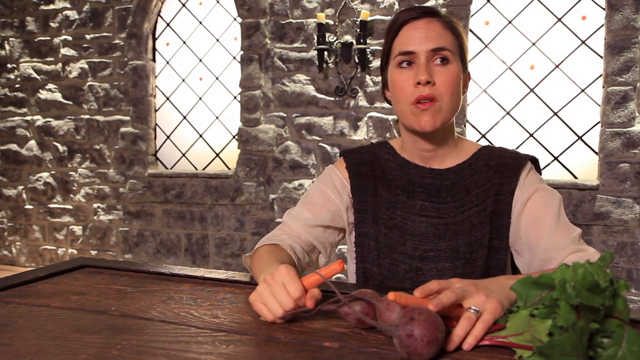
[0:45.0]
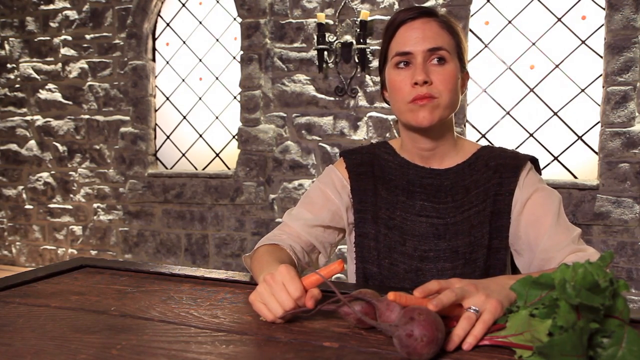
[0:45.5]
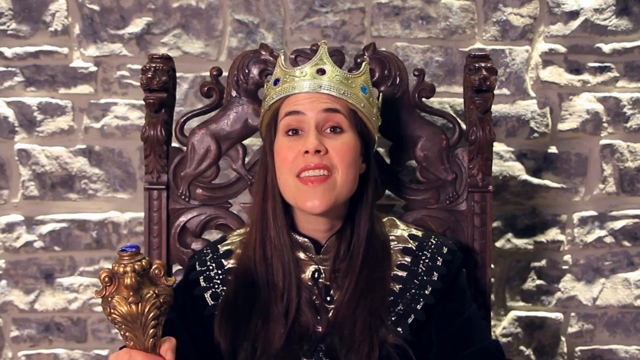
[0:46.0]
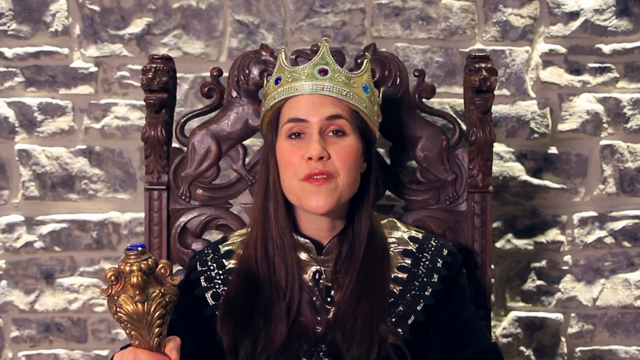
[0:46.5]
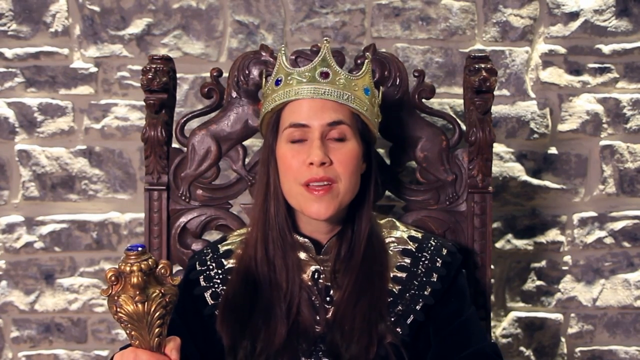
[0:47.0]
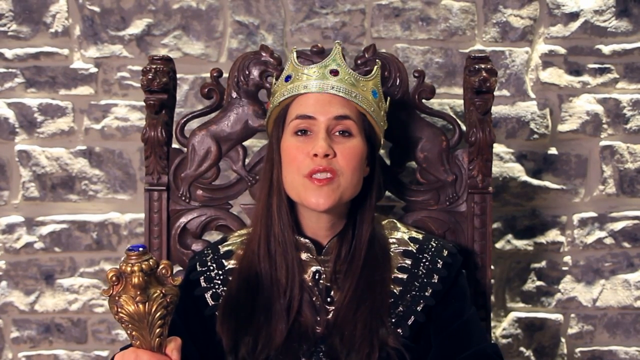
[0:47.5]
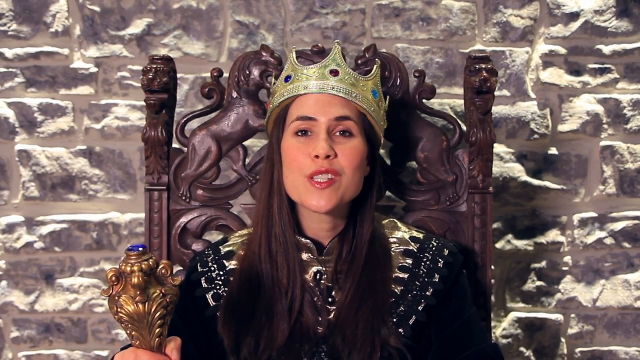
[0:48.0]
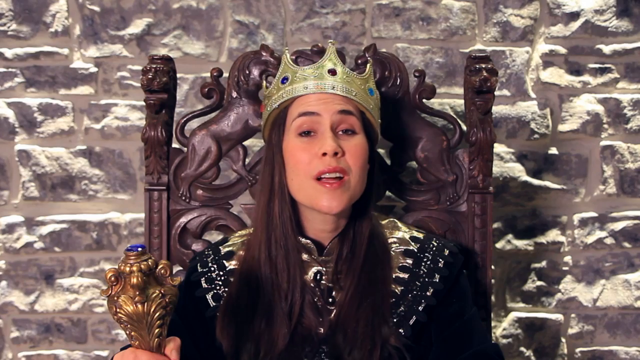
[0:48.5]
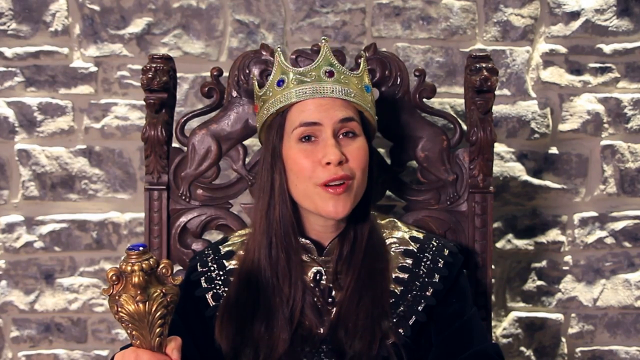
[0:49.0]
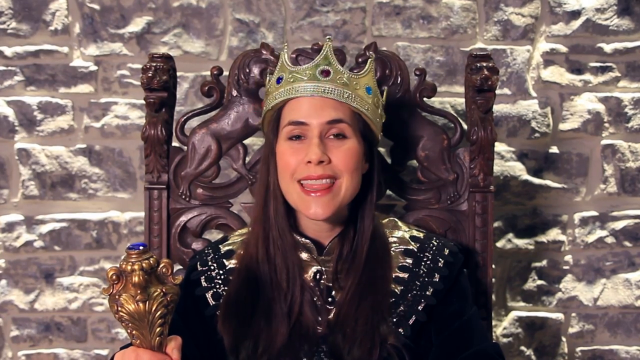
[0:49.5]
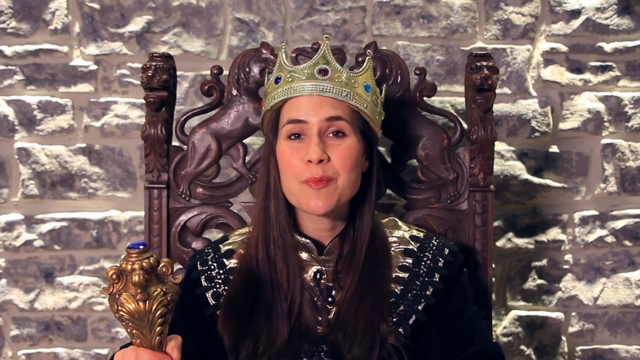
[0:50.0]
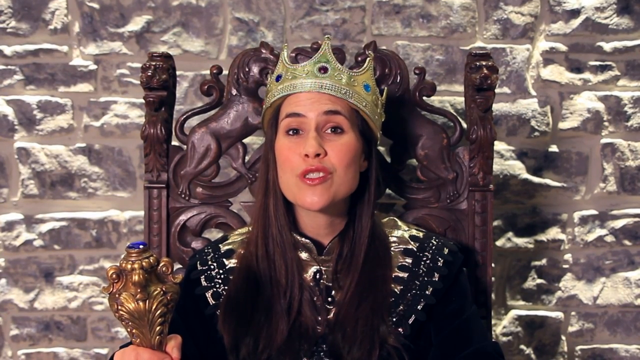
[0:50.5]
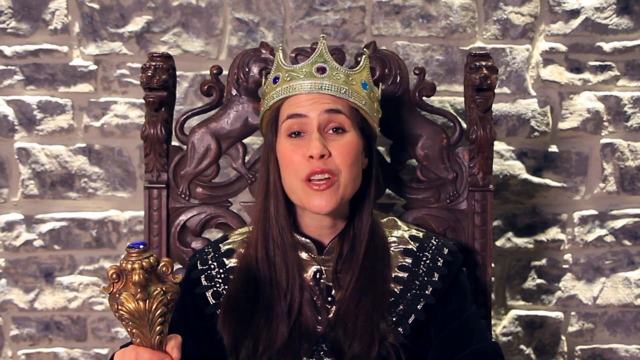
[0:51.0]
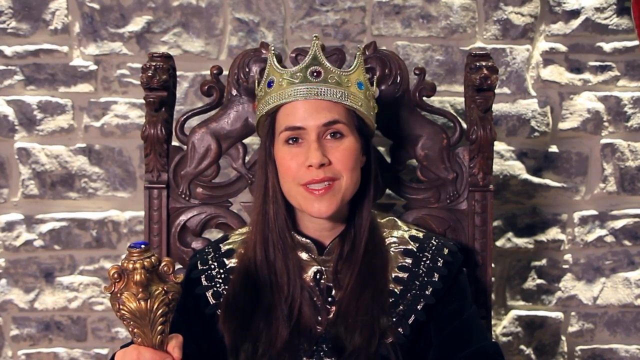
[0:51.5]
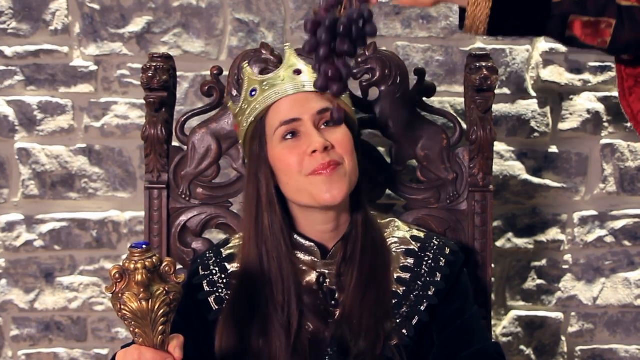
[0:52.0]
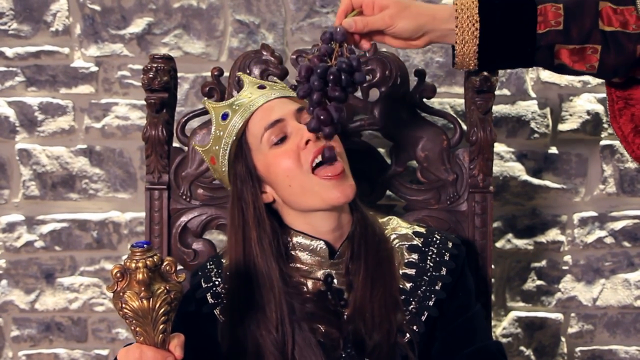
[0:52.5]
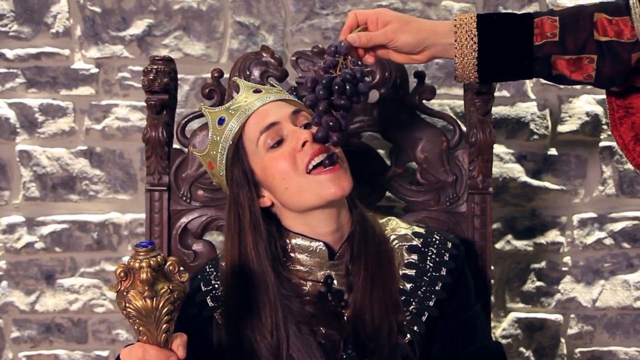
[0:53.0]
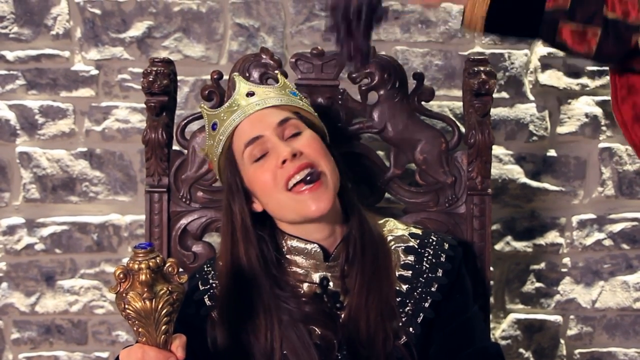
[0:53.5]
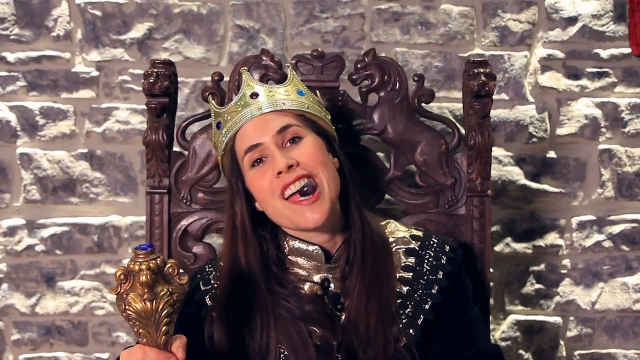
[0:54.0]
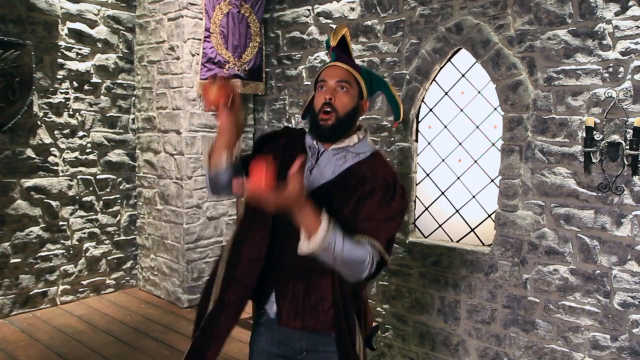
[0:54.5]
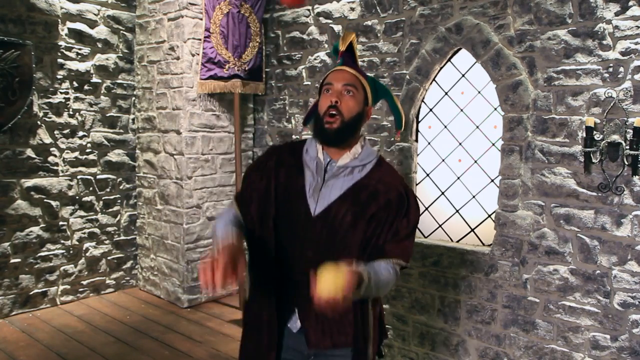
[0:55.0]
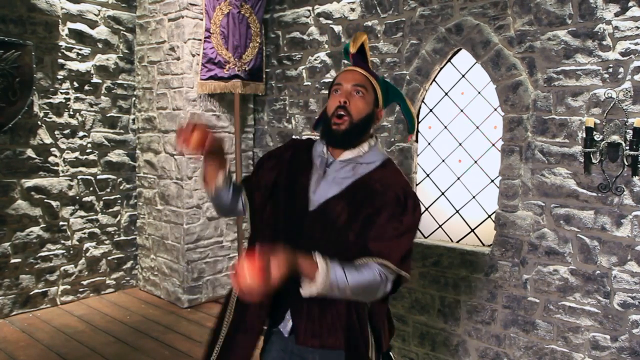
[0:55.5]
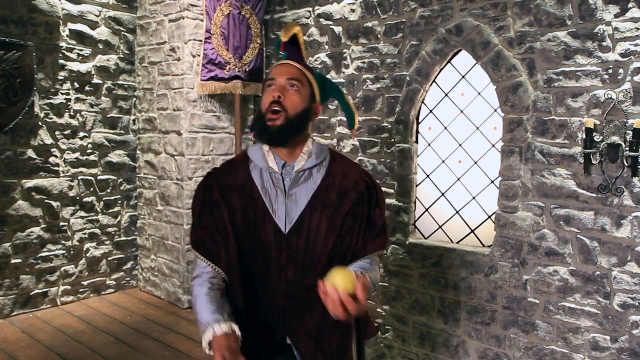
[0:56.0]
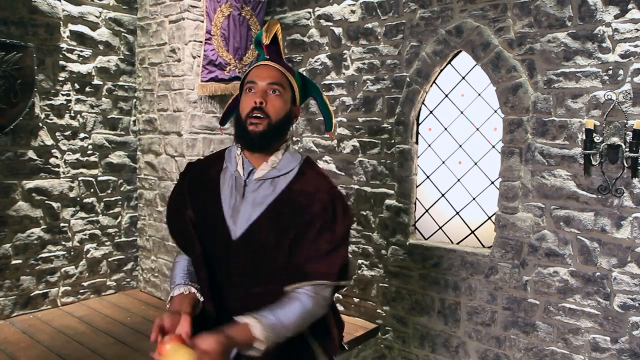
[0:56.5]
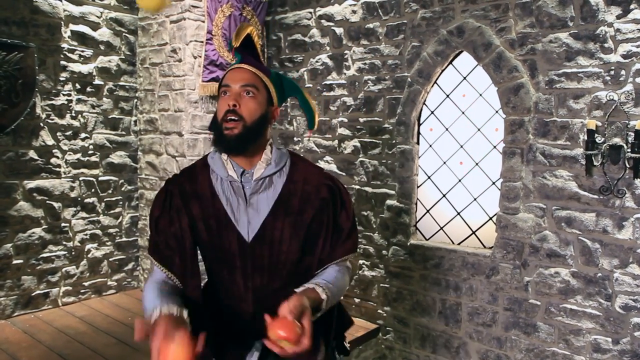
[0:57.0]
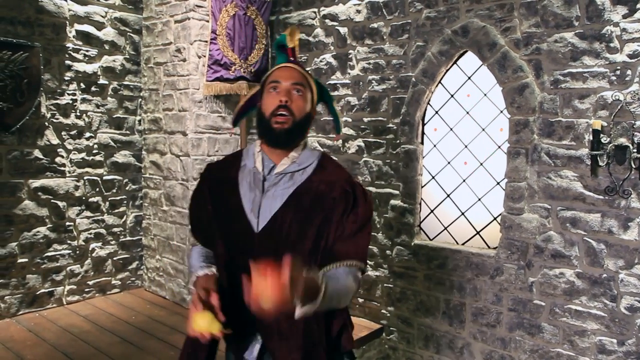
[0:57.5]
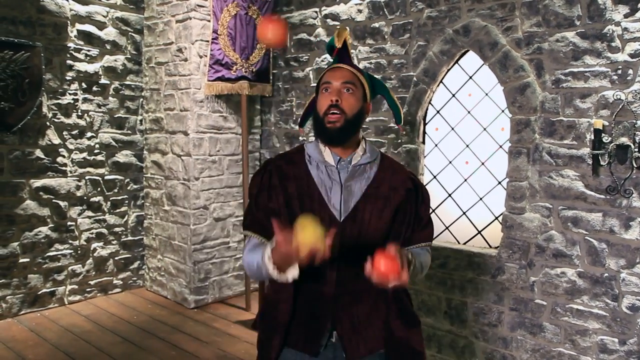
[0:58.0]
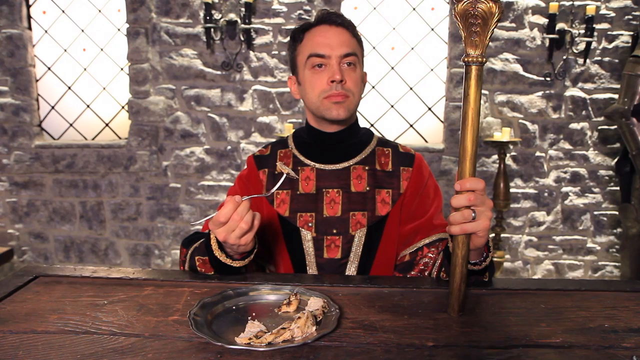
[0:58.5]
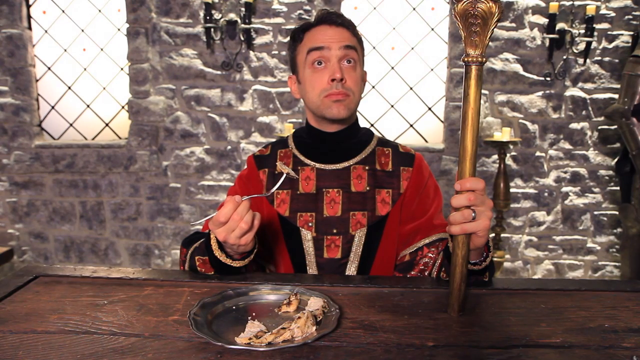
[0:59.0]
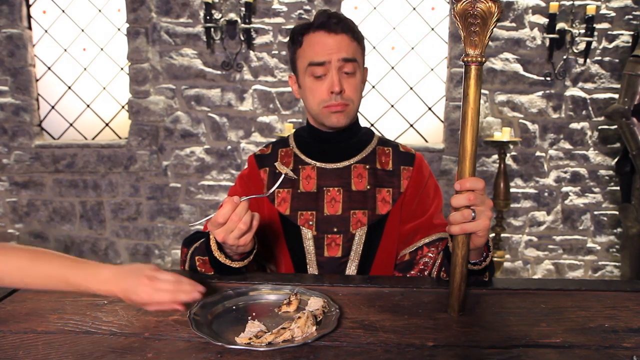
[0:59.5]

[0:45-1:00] The woman in poor attire eats the carrot. The video then cuts to her dressed as a king, framed from the chest up, talking to the camera and still holding the staff. A hand from above her holds down some grapes, and she angles her head up and eats a grape from the bunch. Next, a jester in a jester hat, with a beard and dark hair, juggles apples with a window behind him. Then the man who was proudly eating has his plate grabbed and taken away by someone; he makes little reaction and just watches, still holding some food on his fork.